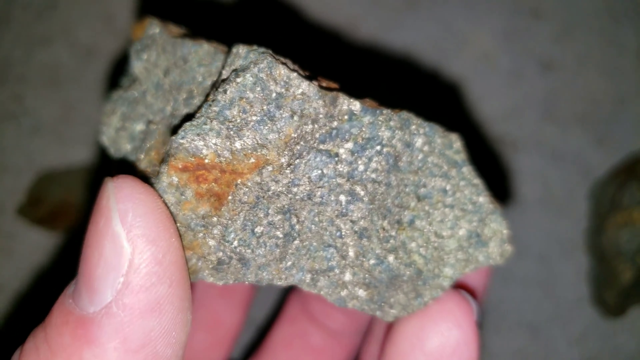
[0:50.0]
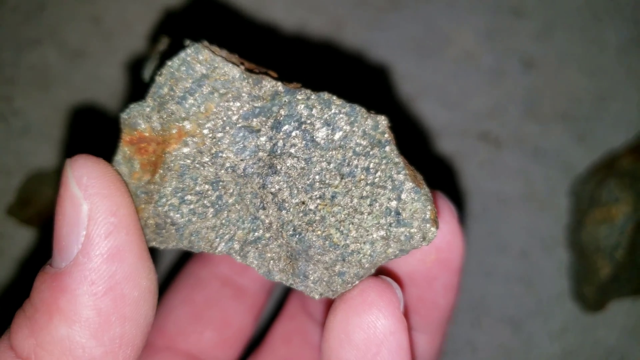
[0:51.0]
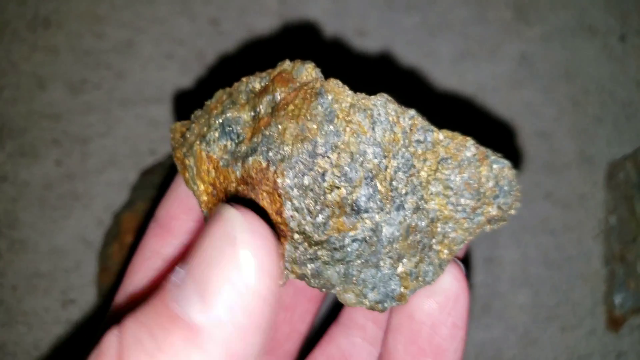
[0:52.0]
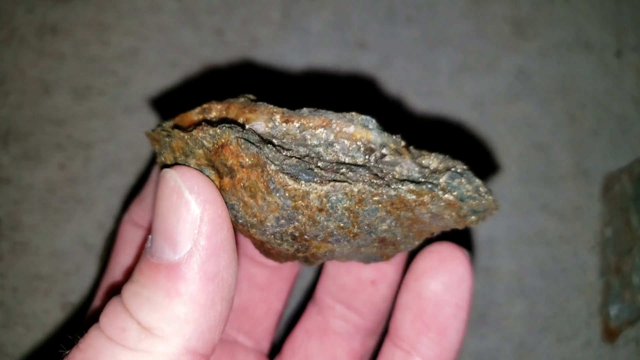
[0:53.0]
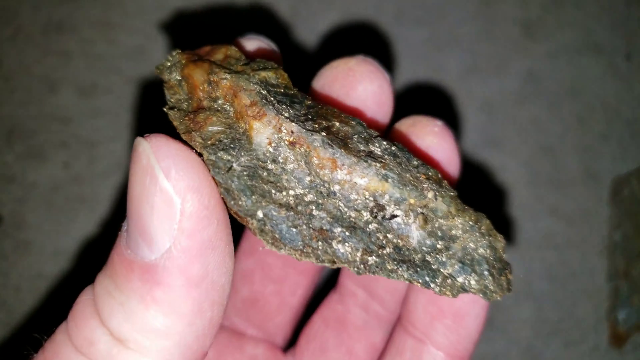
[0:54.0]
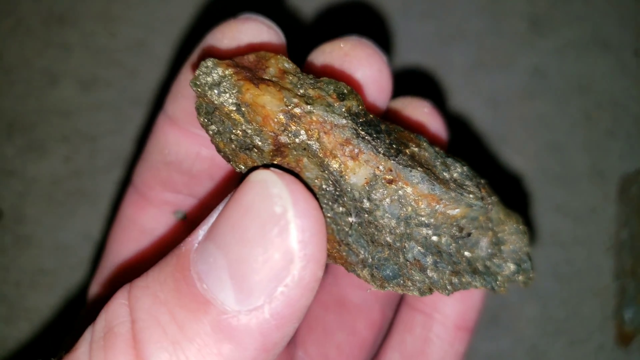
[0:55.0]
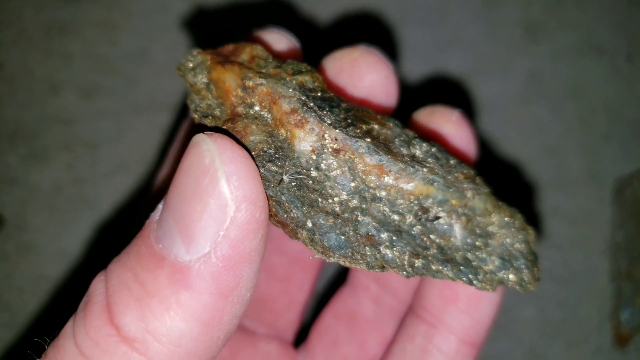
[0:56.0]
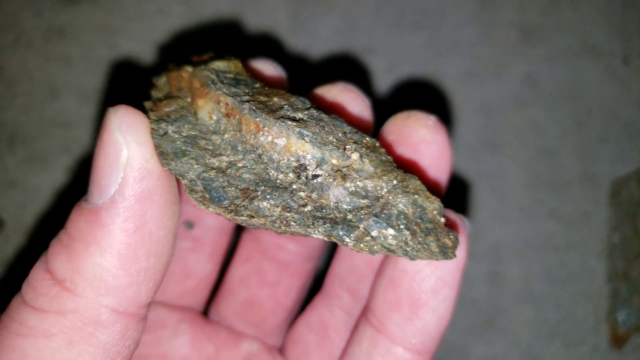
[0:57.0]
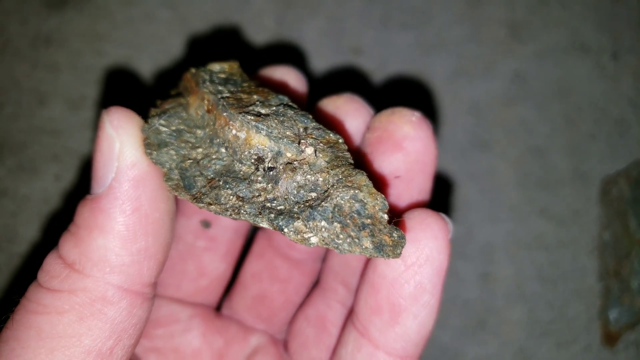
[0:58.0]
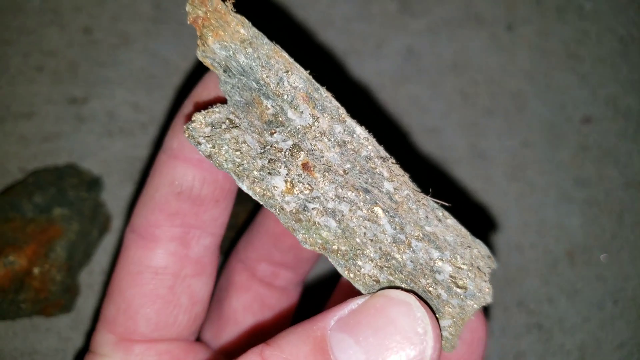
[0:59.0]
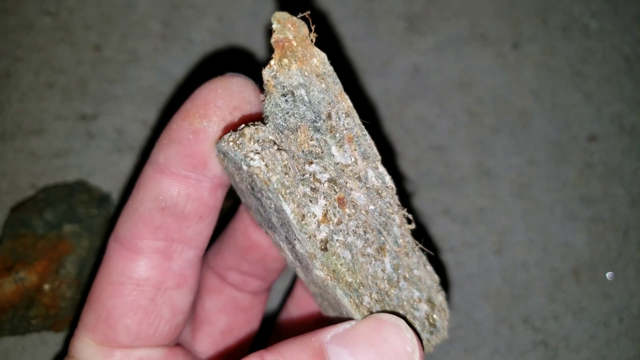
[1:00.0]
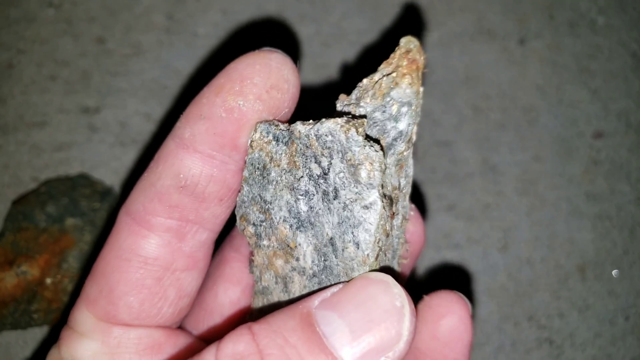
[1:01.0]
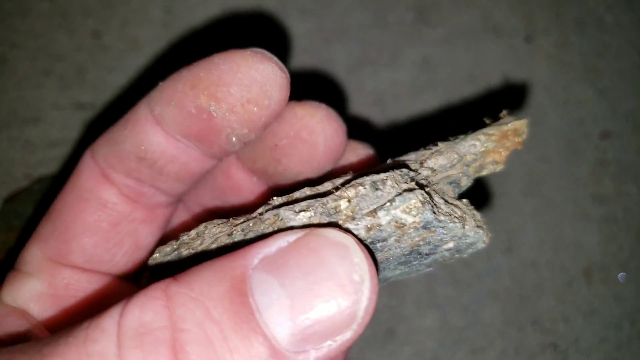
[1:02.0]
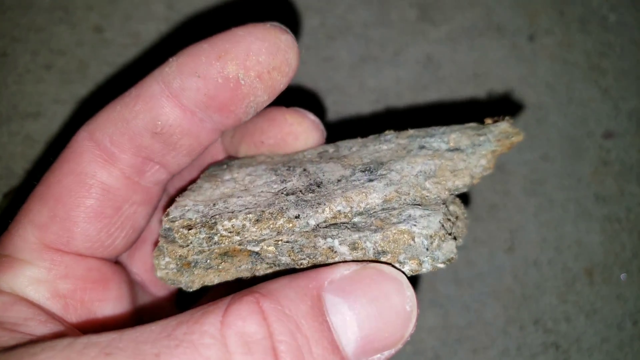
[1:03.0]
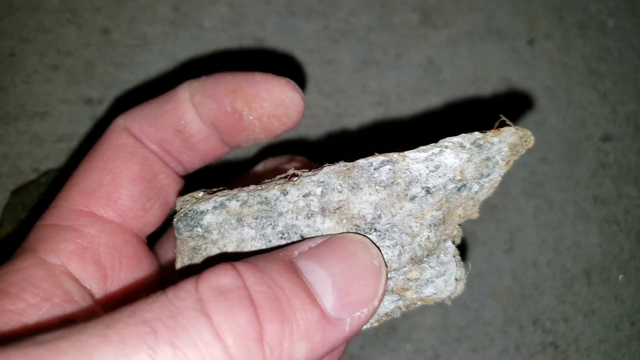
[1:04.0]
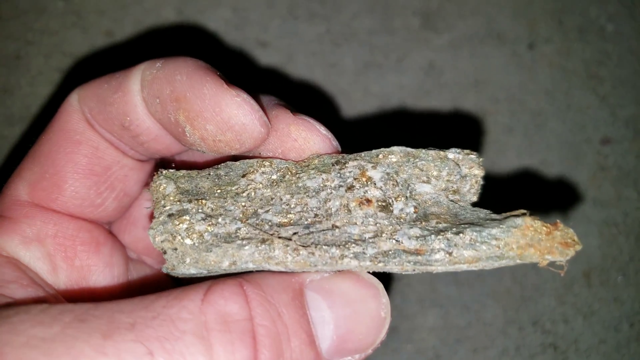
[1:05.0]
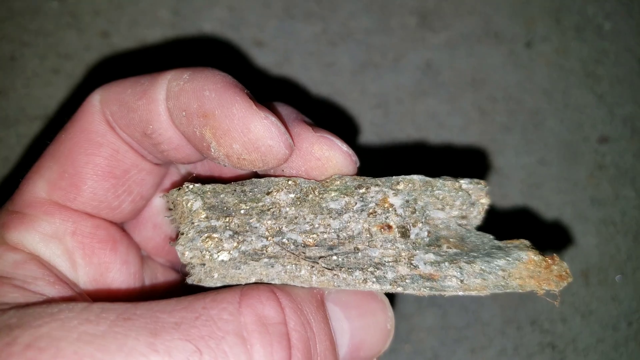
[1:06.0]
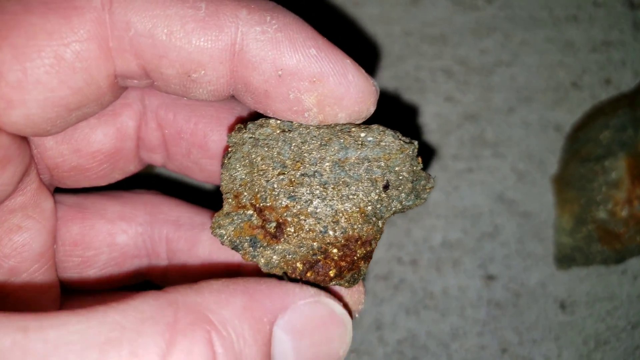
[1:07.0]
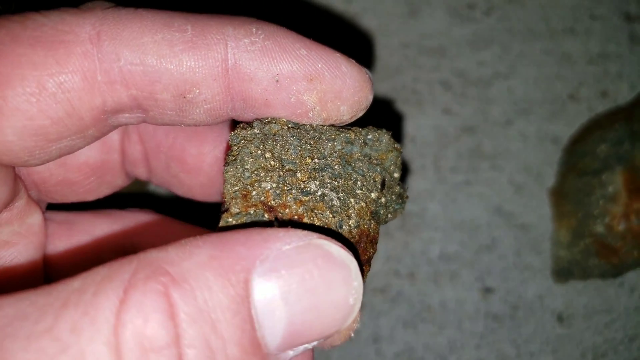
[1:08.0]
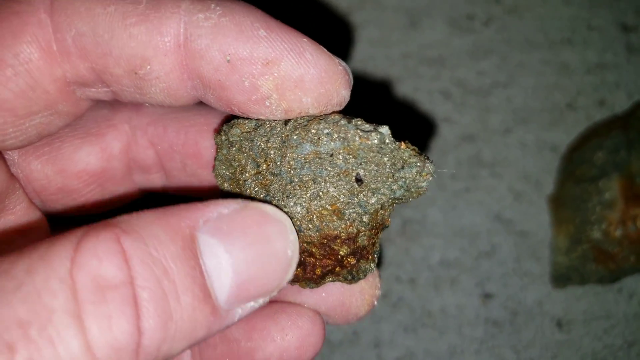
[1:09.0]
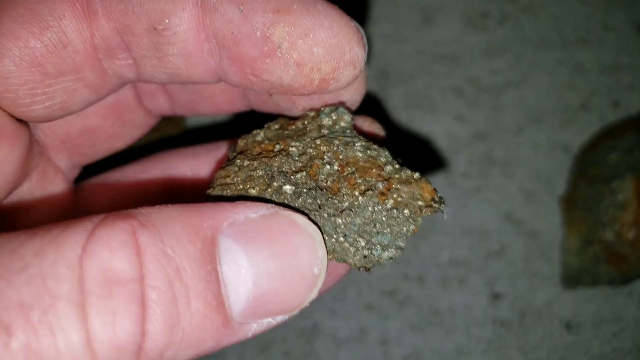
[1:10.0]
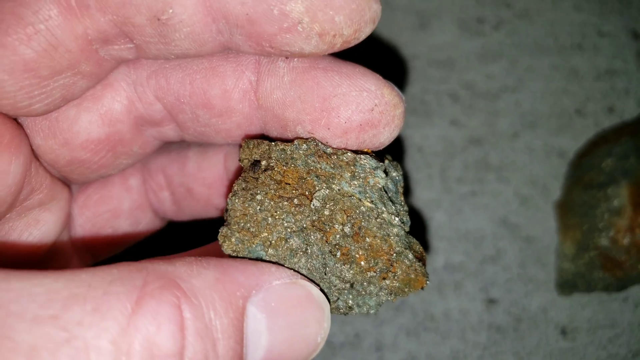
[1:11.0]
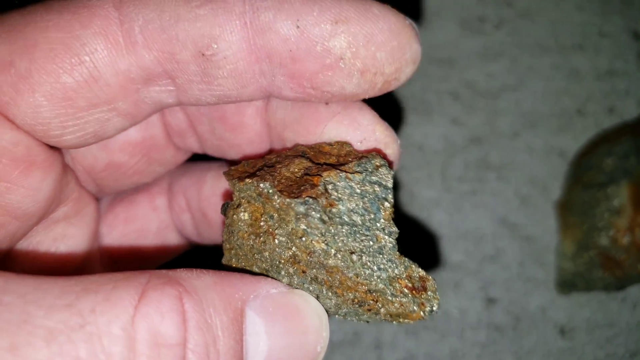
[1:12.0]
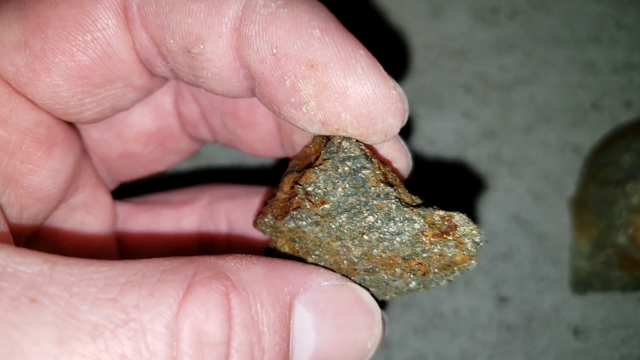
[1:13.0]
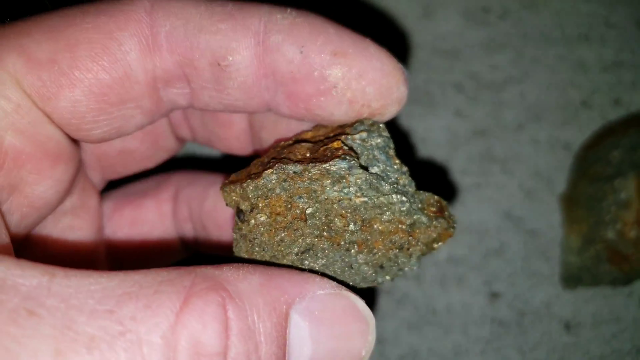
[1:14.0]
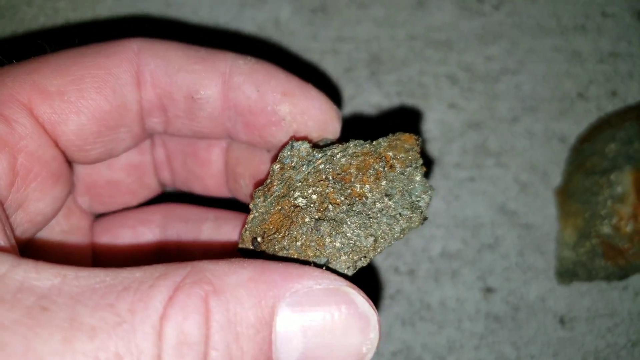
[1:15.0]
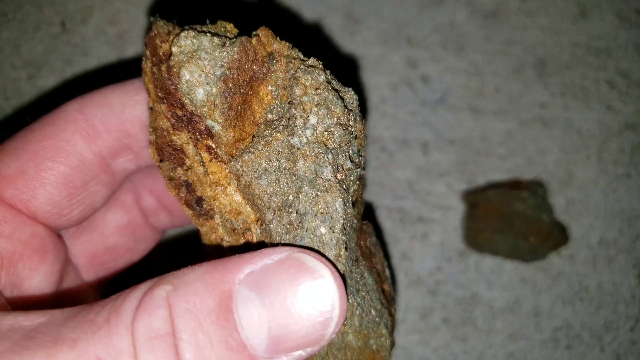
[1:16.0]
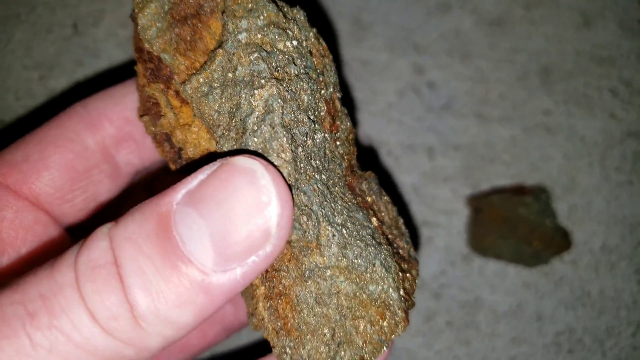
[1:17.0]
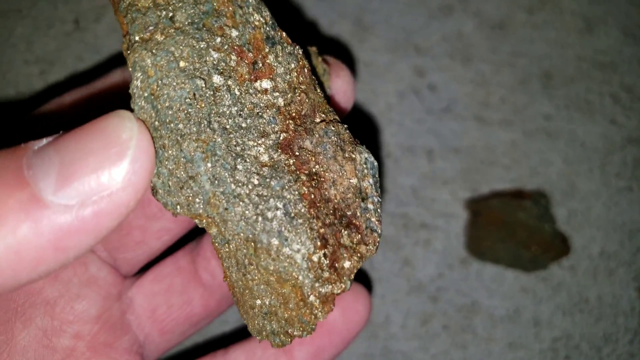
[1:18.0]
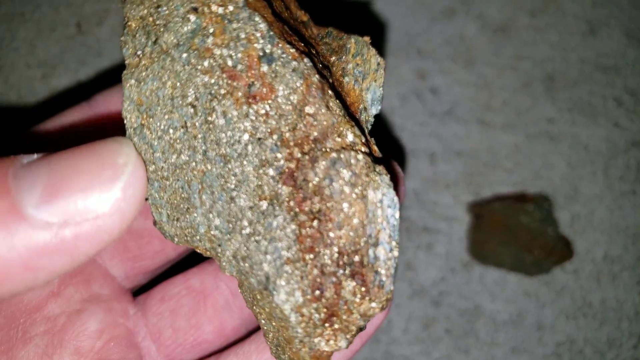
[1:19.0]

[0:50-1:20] In a close-up, a rock is held in the fingertips and thumb of someone's hand. The camera light shows the rock is made up of sections of grey, blue, white, yellow and brown, and it has some sharp edges. As the person turns it to the side, almost layers appear inside the exposed rock: pale, brown, blue, gray and silver layers. The camera slowly moves, as does the hand, showing the rock from different angles. The shot then cuts to another rock-like substance with a flat side and different layers; it is more chalky than the first rock, has rougher edges, and is grey to silver with yellow portions. Next comes a small rock of grey, green, brown and orange, about half the size of the previous rocks, that looks quite granular, with a brownish-red core inside to one side. Then a large rock is seen against the camera light, with streaks of brown against green sections.